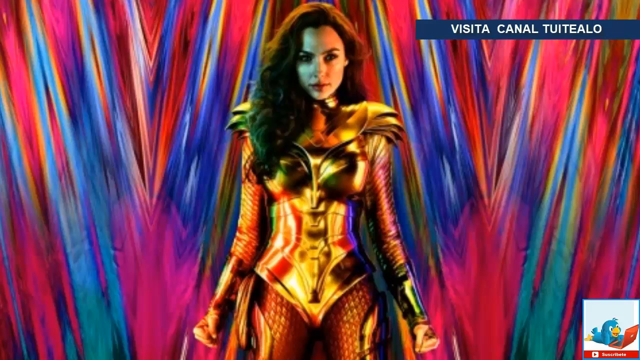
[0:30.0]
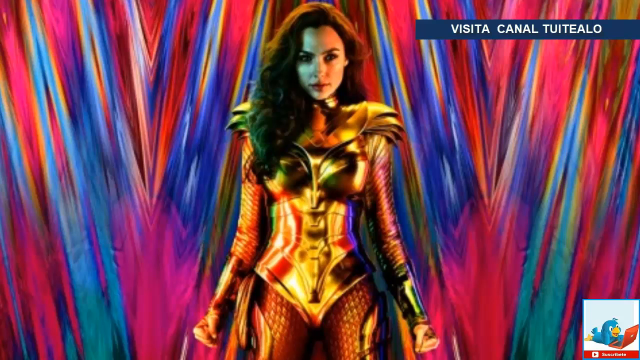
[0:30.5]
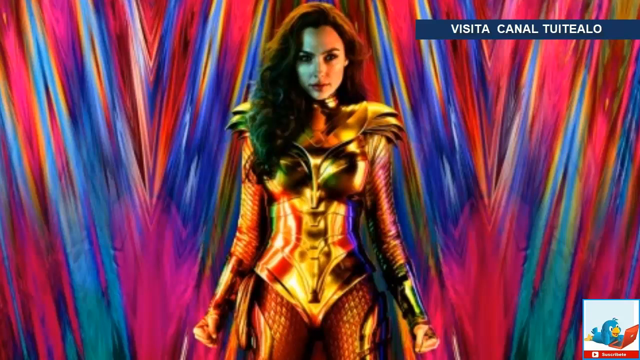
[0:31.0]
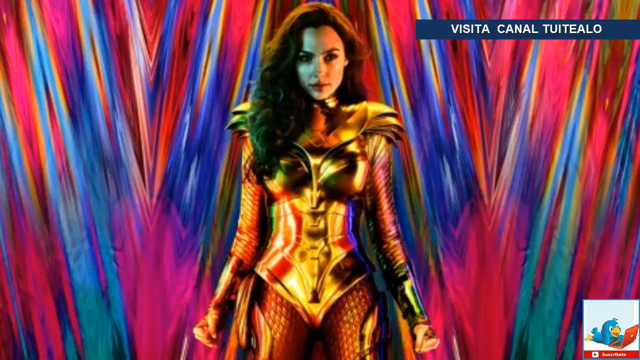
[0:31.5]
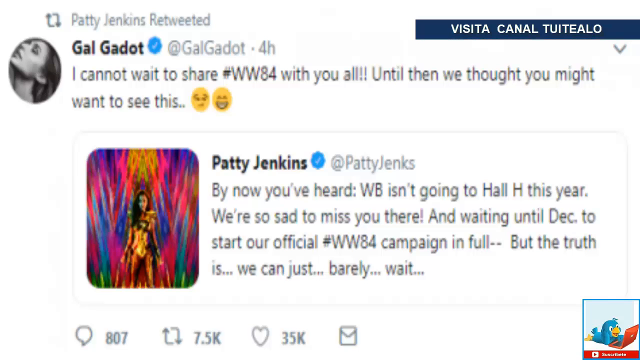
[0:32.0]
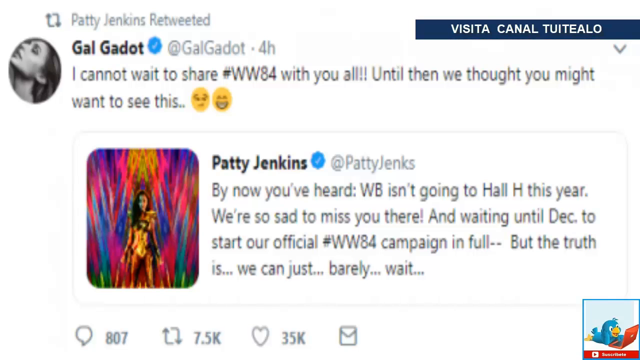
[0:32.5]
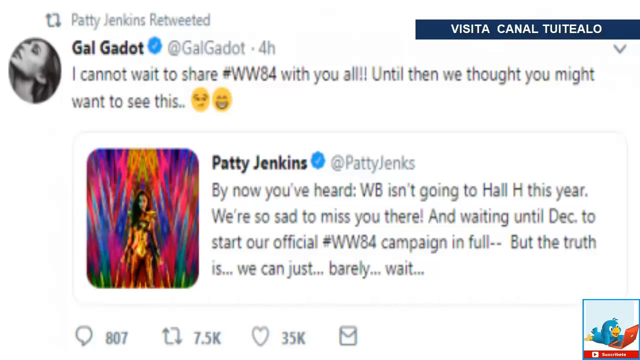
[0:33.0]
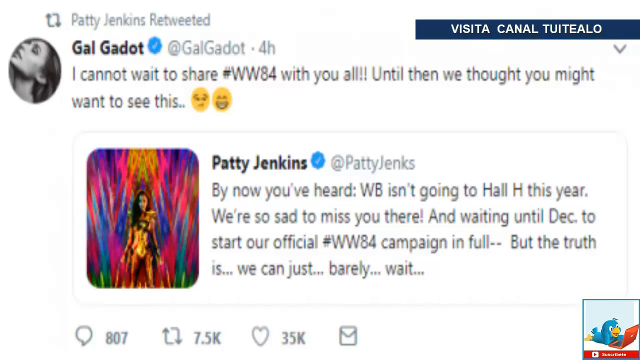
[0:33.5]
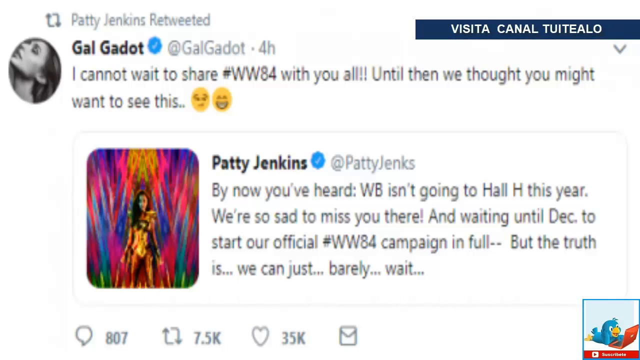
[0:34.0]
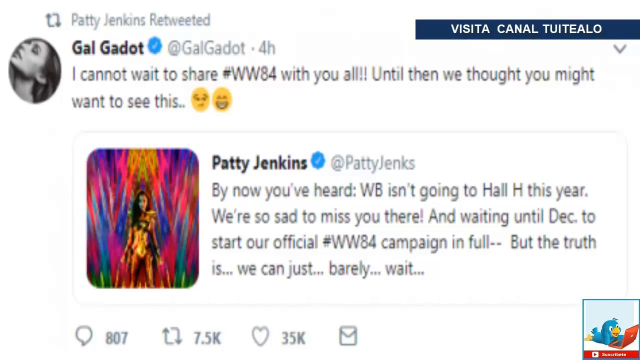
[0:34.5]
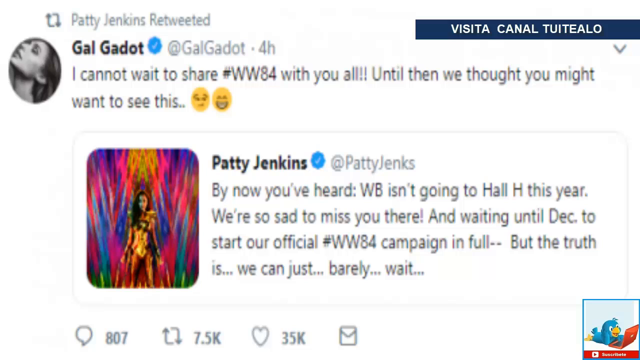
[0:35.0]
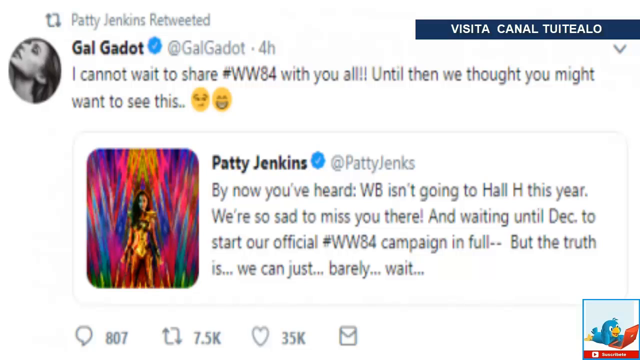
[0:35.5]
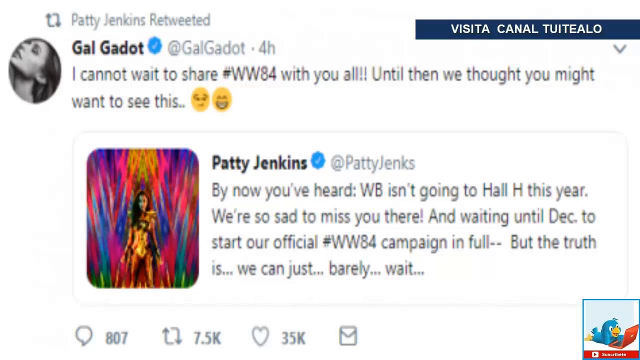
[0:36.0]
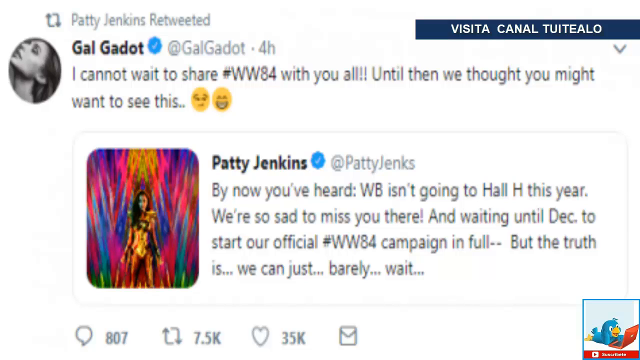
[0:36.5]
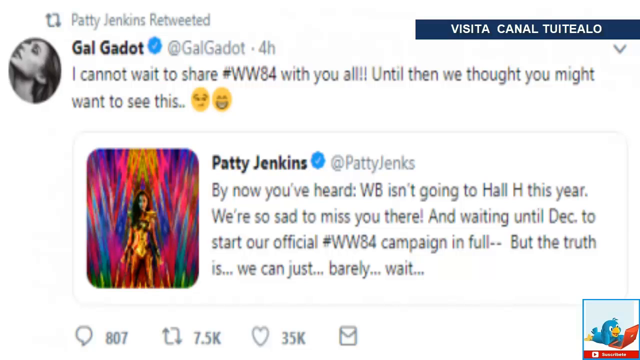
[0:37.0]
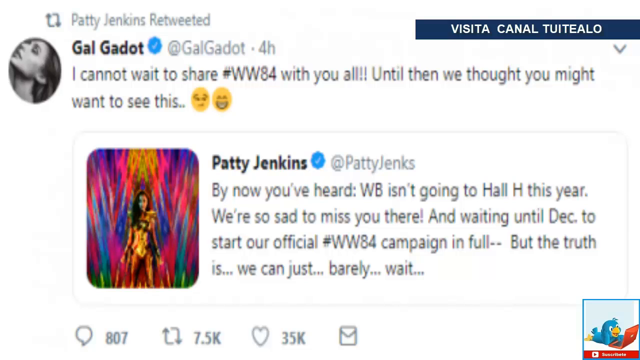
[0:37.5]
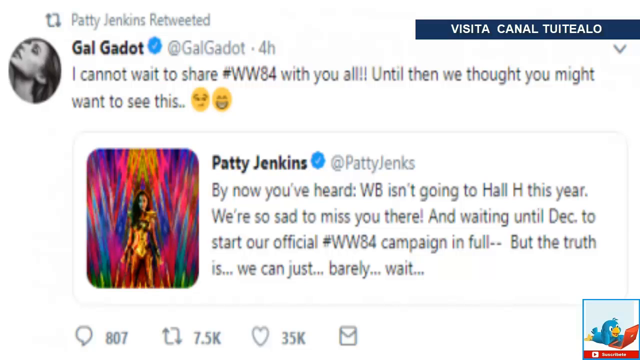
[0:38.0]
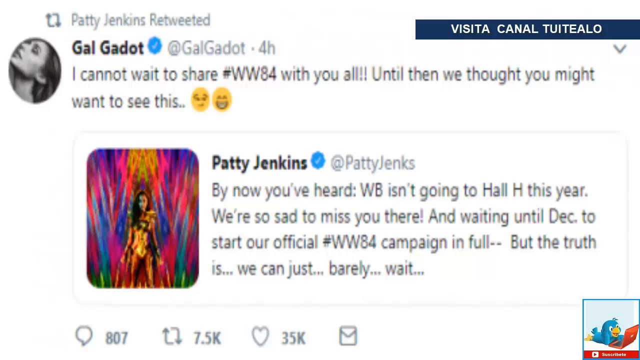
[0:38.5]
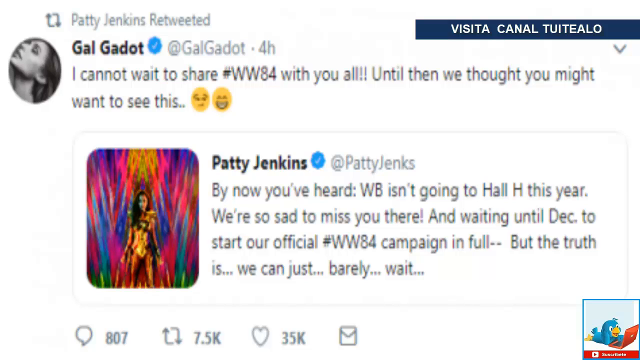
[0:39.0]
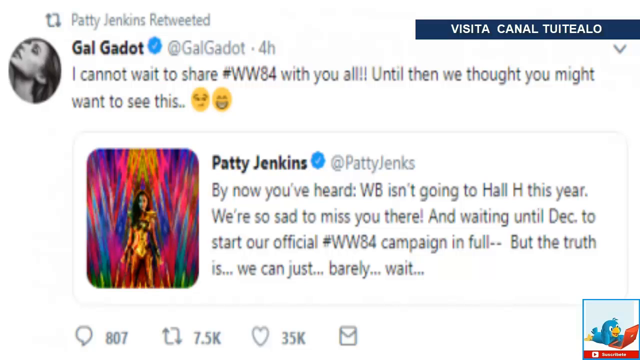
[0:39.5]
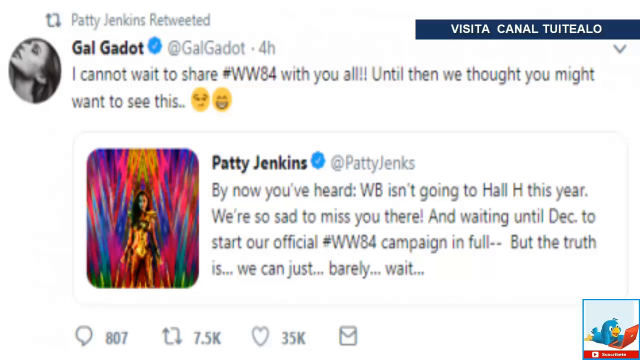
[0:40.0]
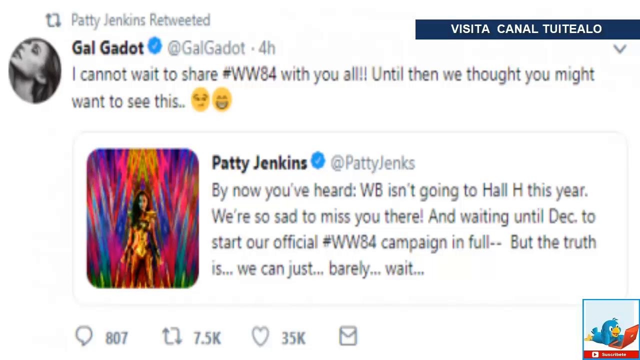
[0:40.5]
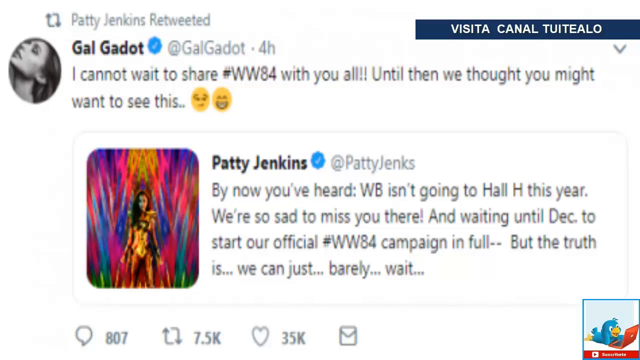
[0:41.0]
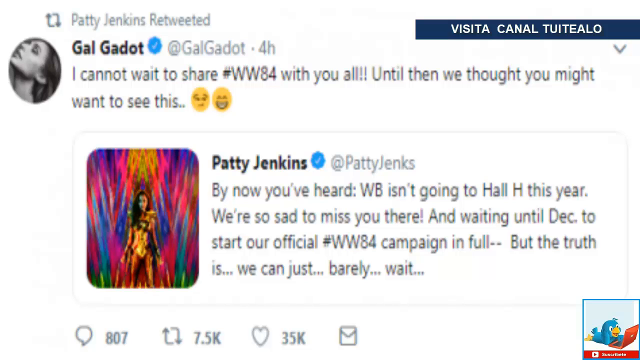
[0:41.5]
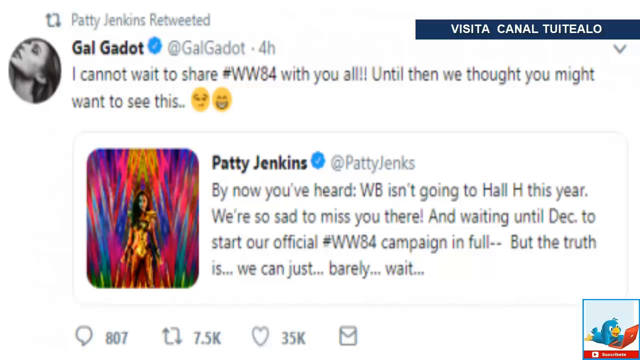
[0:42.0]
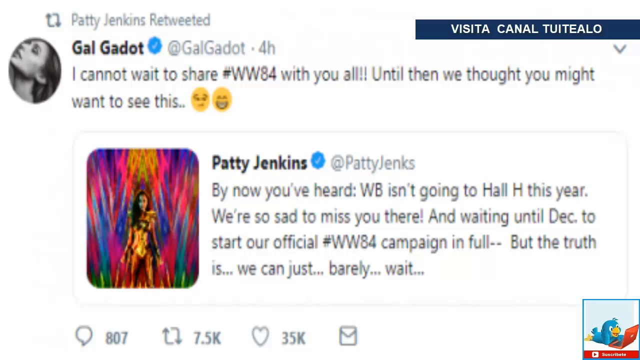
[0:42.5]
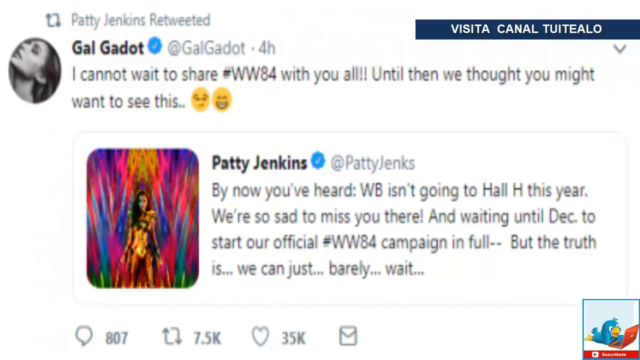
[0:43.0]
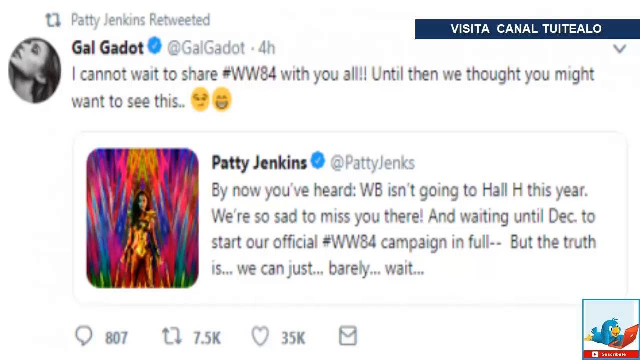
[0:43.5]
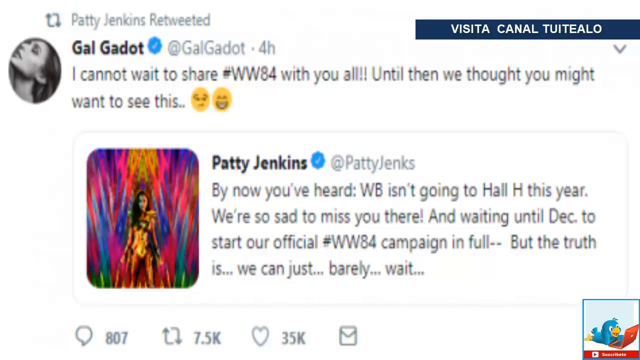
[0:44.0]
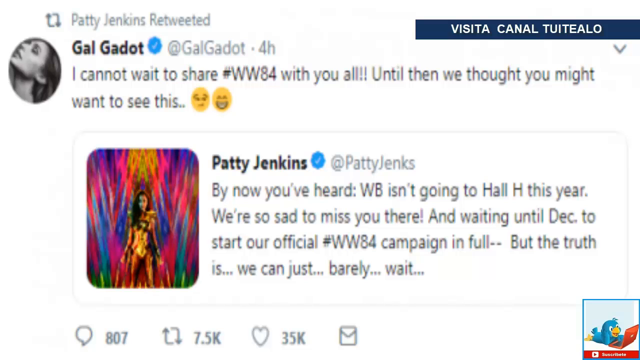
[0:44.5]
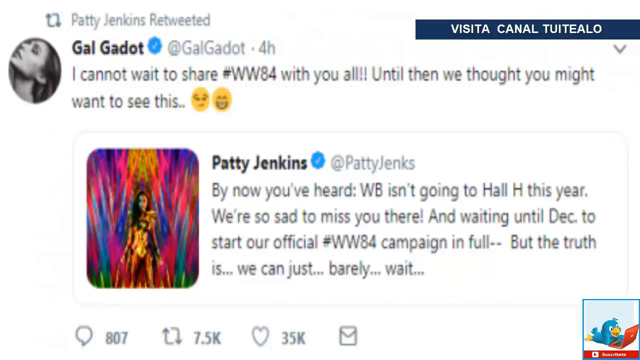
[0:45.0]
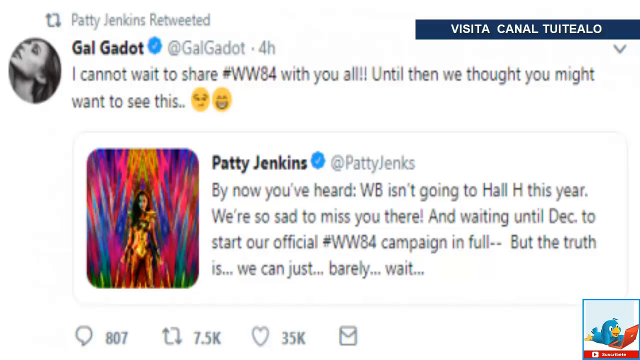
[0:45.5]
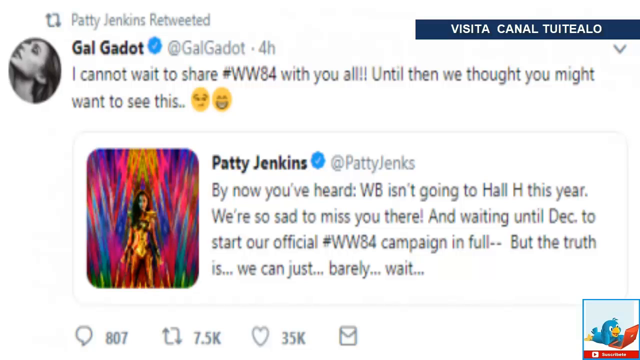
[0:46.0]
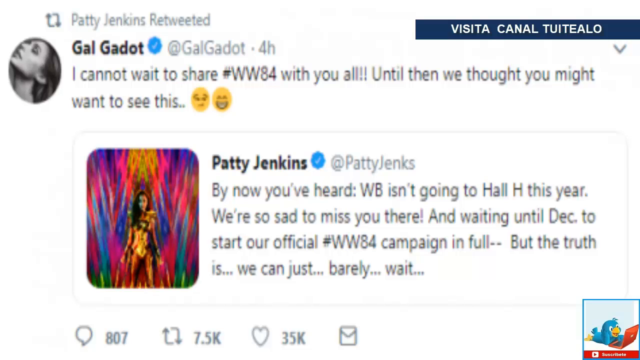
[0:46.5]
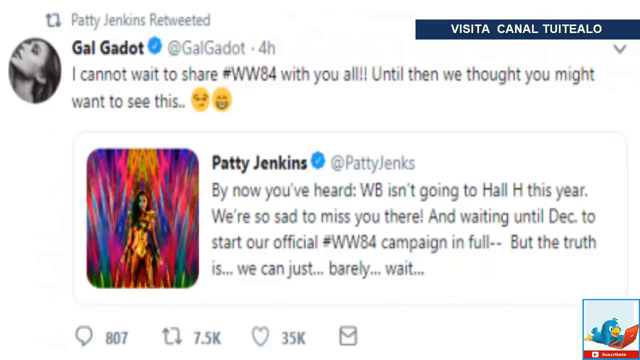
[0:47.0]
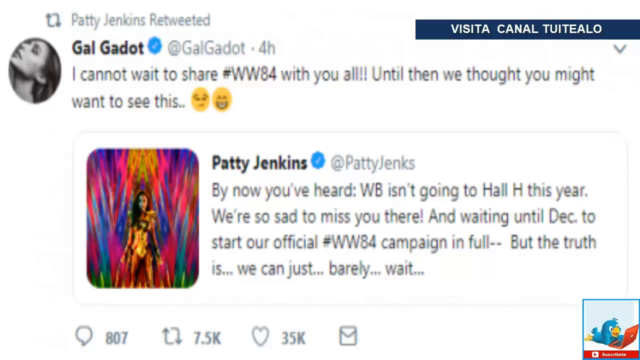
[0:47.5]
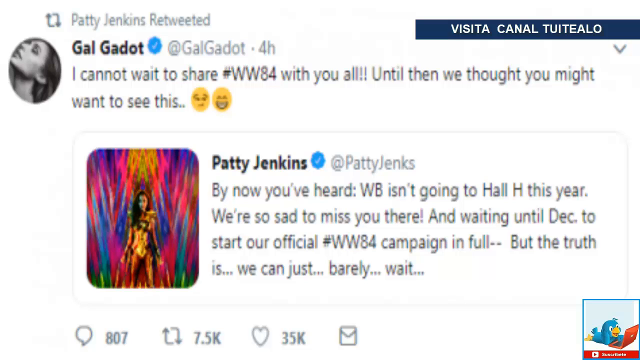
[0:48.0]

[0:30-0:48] A woman with dark brown hair, dark eyebrows, dark eyes and red pinky lips is wearing a gold-colored armor-type costume, with alternating red and blue stripes behind her that blend in certain areas to create a pink-like hue. The scene then shifts to a screenshot of a tweet from Gal Gadot @GalGadot, posted four hours ago, which reads, "I cannot wait to share #WW84 with you all!! Until then, we thought you might want to see this." Gal Gadot's tweet also contains several emojis. Right below it is another tweet from Patty Jenkins @PattyJenks, which includes an image from the earlier scene along with a short descriptive text right next to it. Throughout the video, a blue text box with white lettering that appears to be in a Latin language is in the top right corner of the screen. The video ends after displaying these tweets.